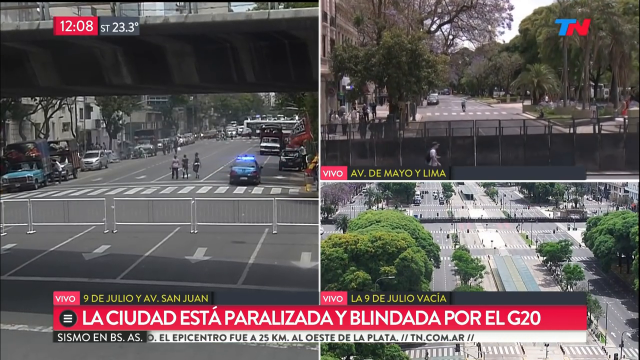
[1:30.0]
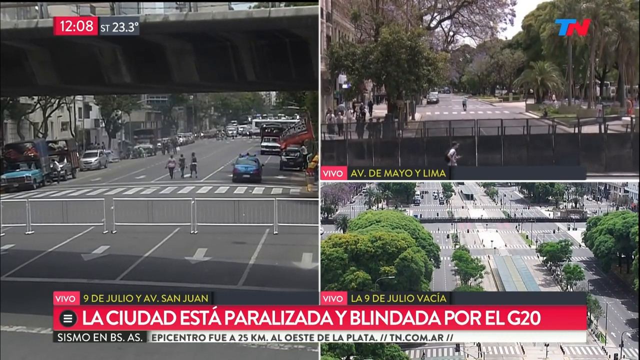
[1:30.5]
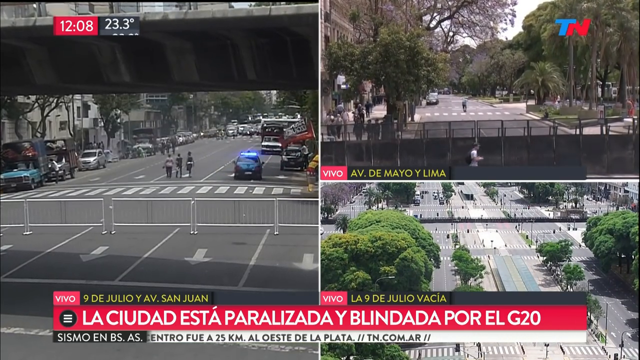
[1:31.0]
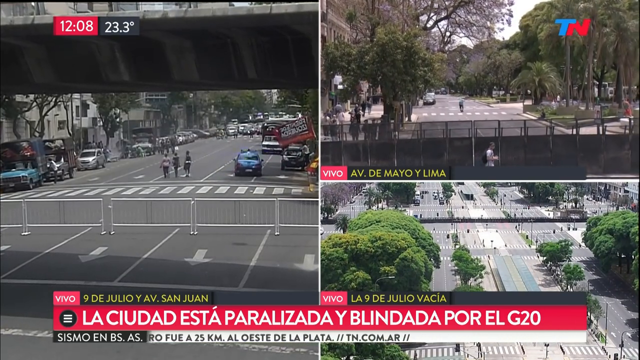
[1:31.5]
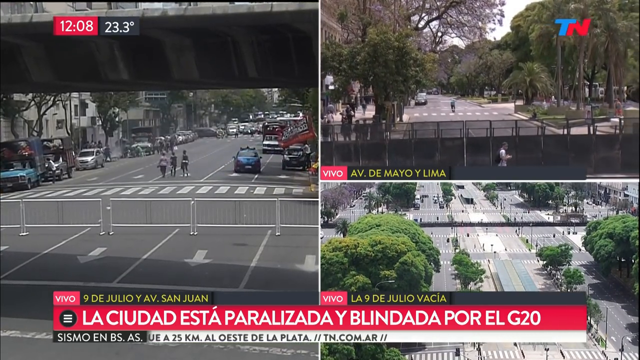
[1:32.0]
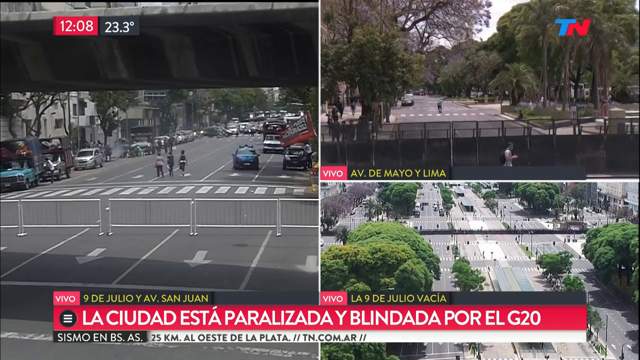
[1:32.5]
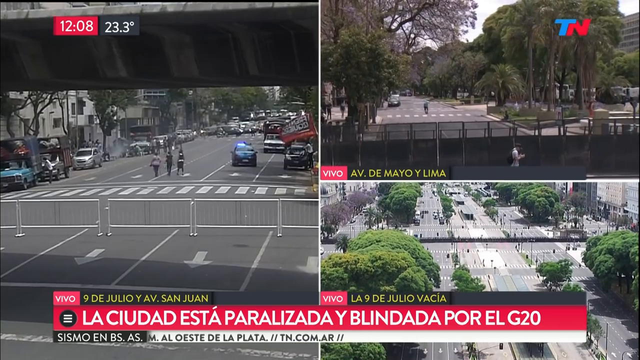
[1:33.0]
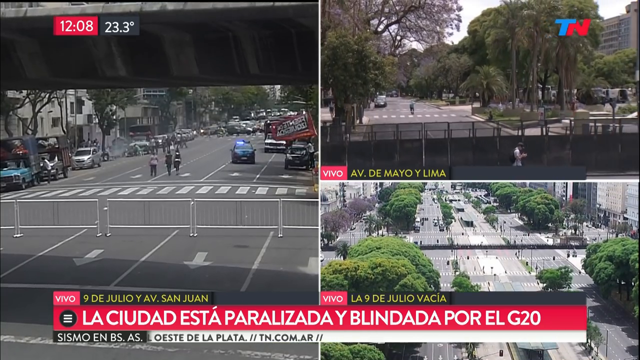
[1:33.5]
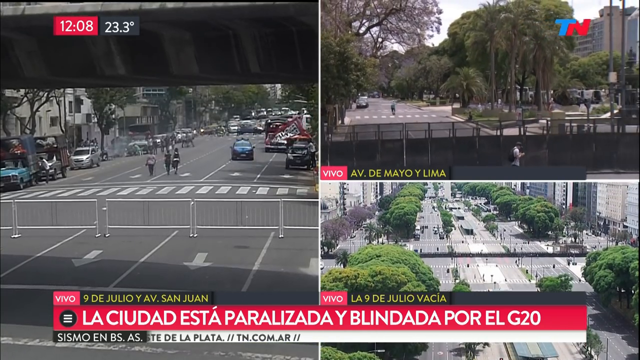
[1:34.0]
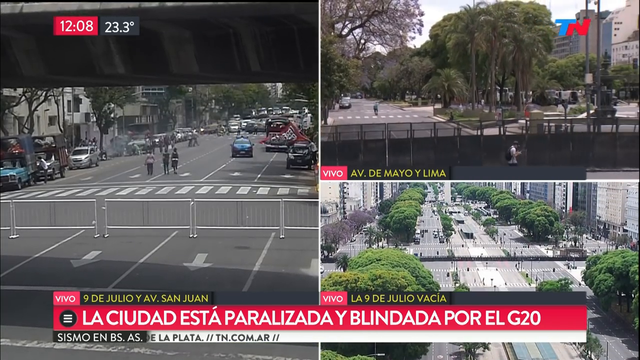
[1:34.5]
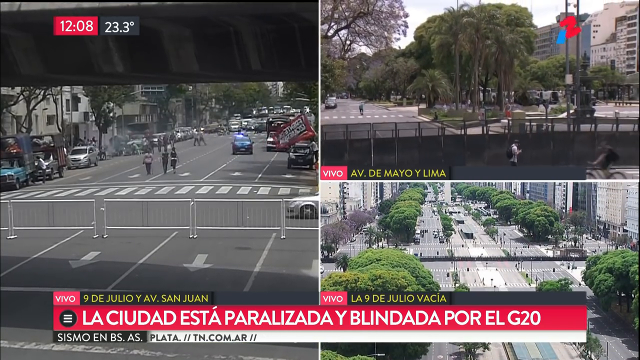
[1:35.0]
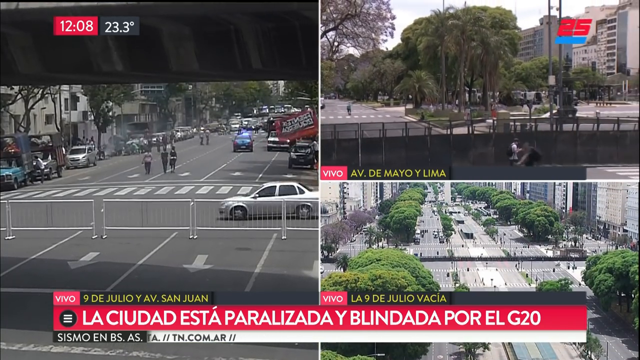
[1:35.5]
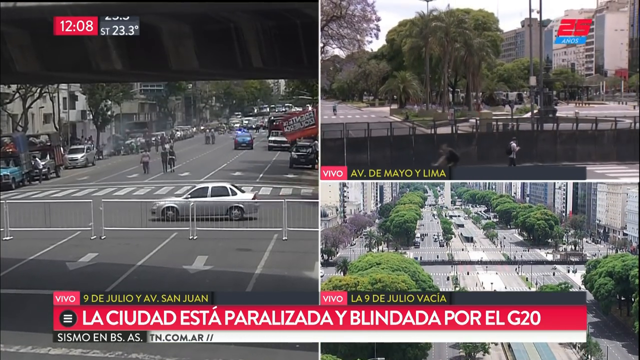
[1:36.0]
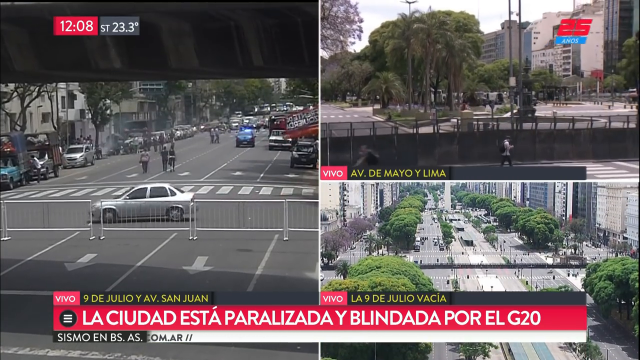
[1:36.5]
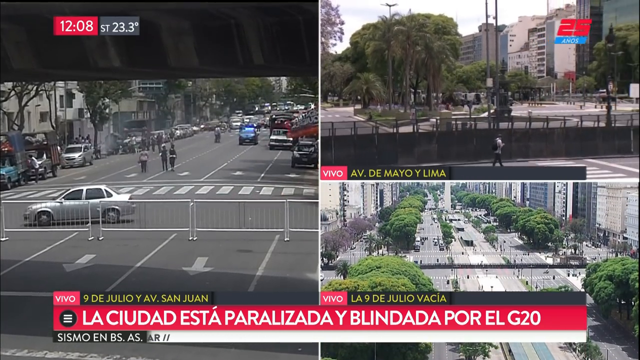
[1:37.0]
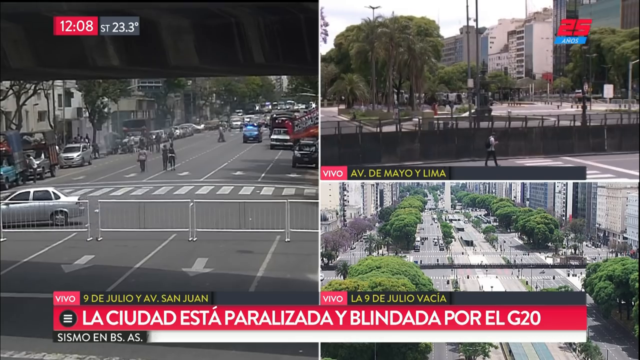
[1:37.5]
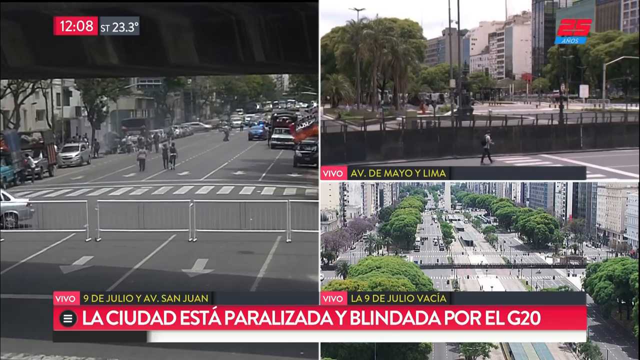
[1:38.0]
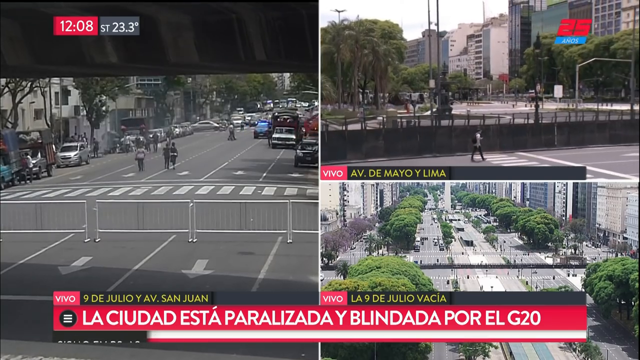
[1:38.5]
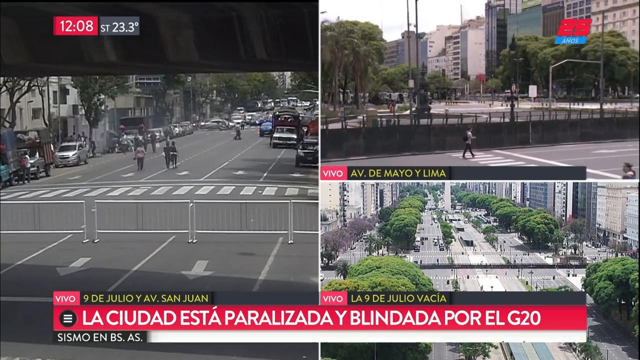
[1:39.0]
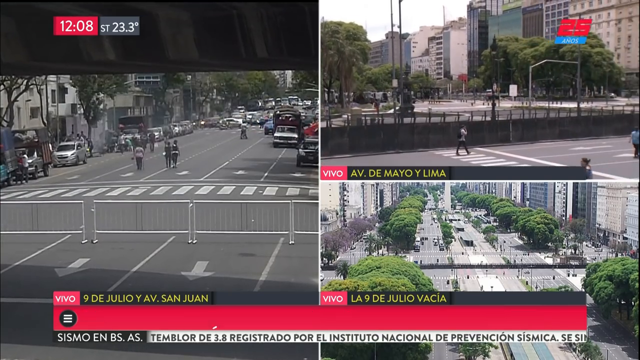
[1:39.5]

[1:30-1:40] The left image shows an extended view of the street. Cars are lined up on the side, and people stand in the middle of the street as if stopping people from coming through. Metal gates go across the street in front of the crosswalk, and in front of the gates are white arrows in lanes pointing toward the viewer. In the top right image, a gate is also blocking off something. One person walks in front of the gates, closer to the viewer, while on the other side of the gate a crowd of people walks on the sidewalks to the left. Only one vehicle is visible on the street, along with a visible crosswalk and very large, tall trees. The bottom right image shows very large trees and many streets and lanes, but only a very few cars on the left, so far back that it is impossible to tell how many there are. Several lights are in that picture, and it is similar to before. What looks like a police car or some type of emergency vehicle goes by with its lights going. Cars go by, and in the top right image people walk in the middle of the street. The bottom image shows little change.